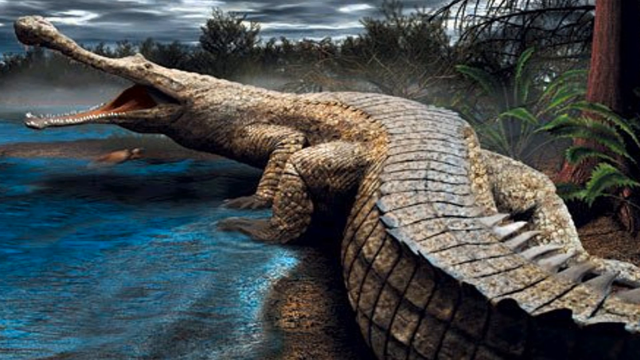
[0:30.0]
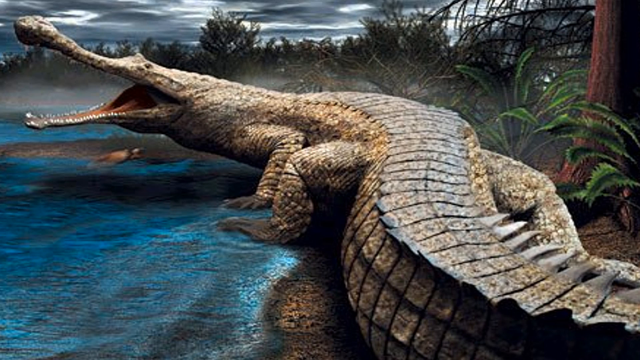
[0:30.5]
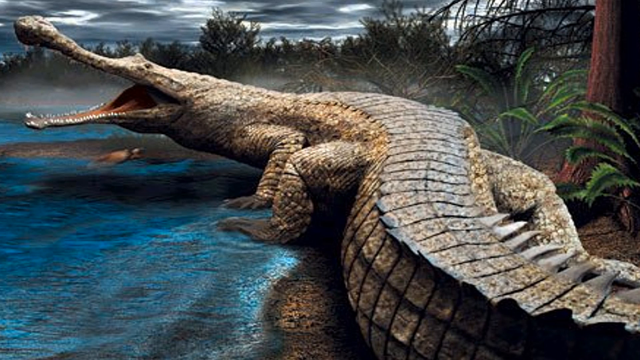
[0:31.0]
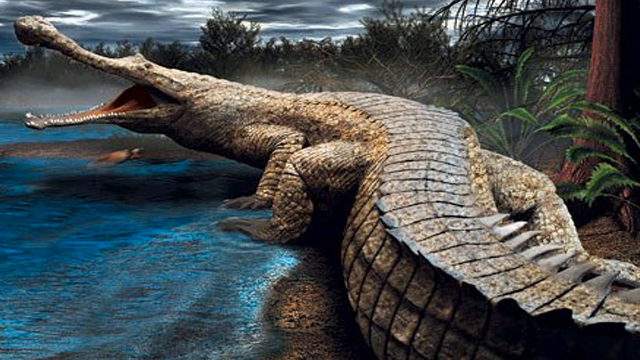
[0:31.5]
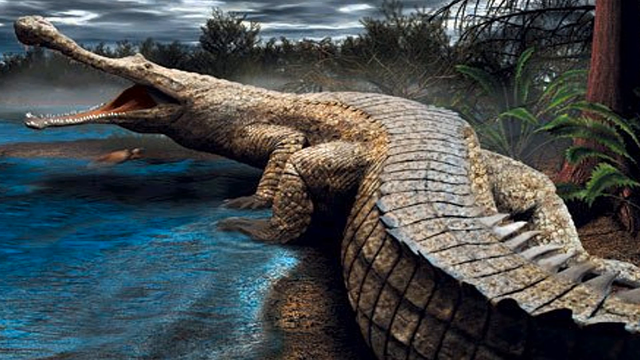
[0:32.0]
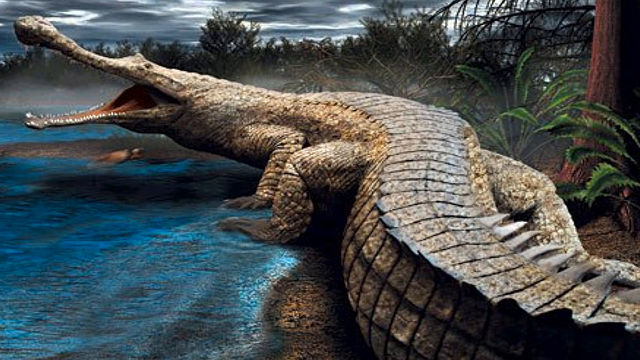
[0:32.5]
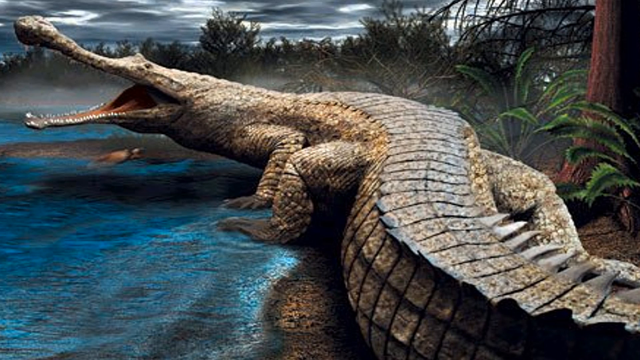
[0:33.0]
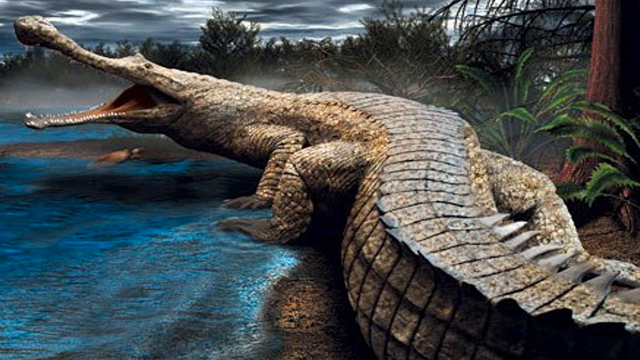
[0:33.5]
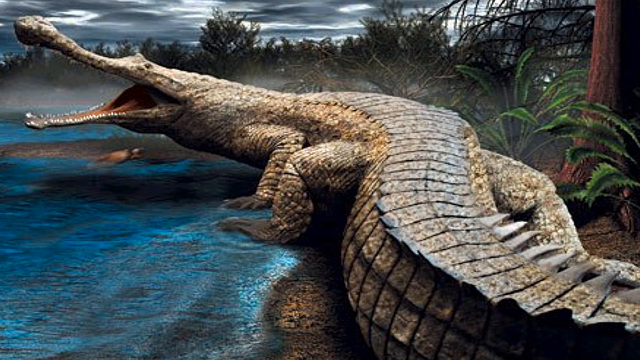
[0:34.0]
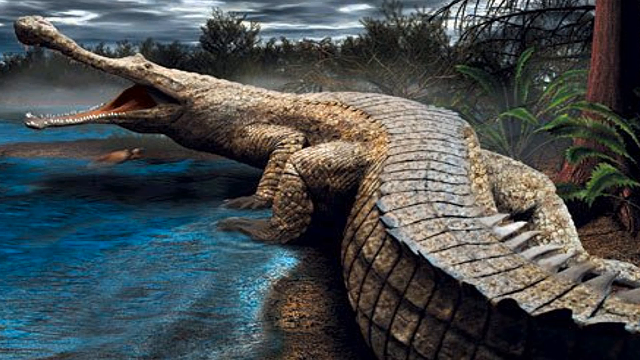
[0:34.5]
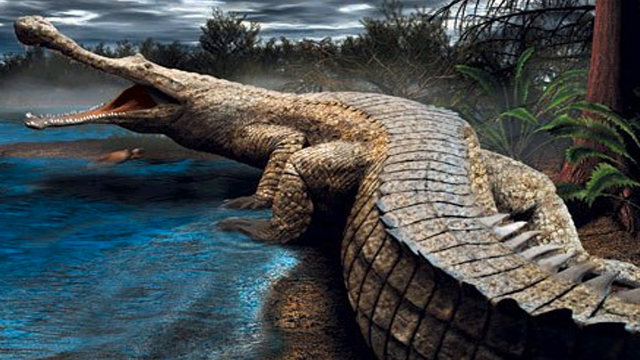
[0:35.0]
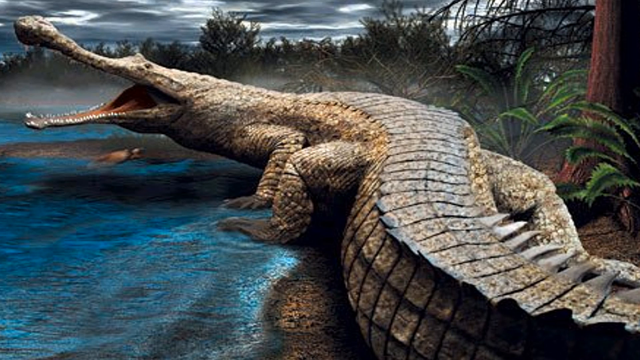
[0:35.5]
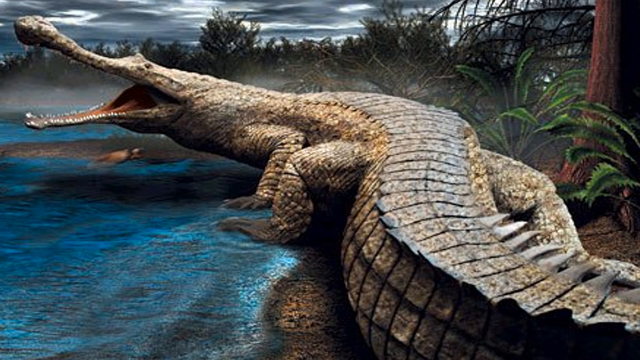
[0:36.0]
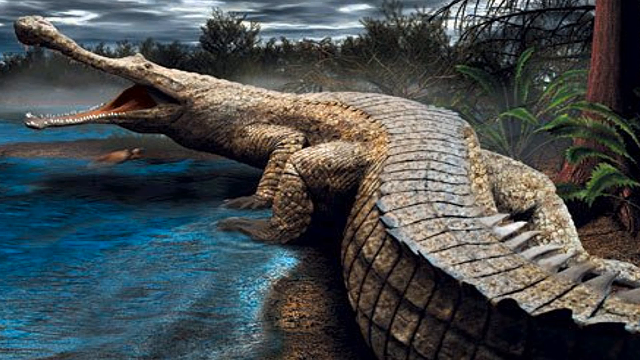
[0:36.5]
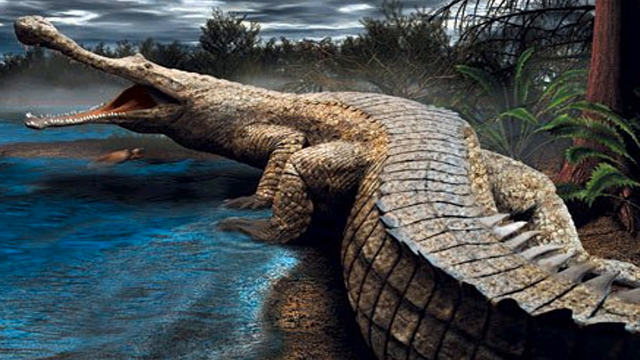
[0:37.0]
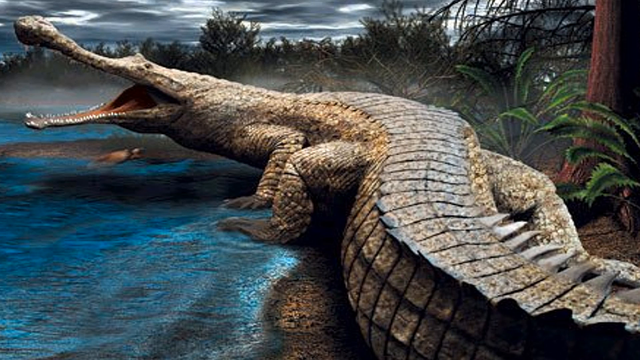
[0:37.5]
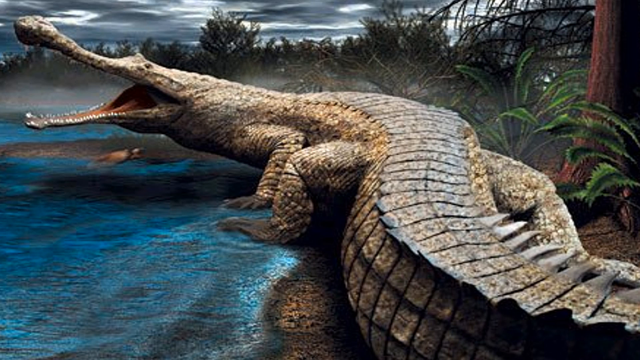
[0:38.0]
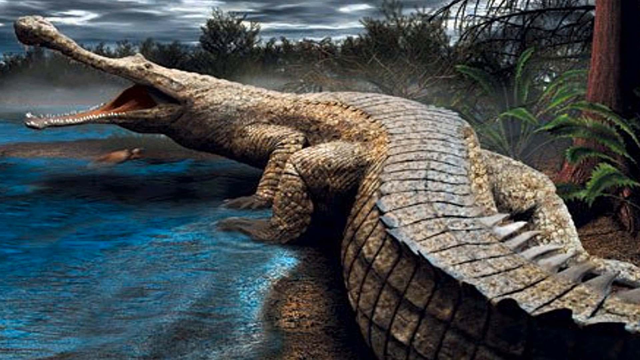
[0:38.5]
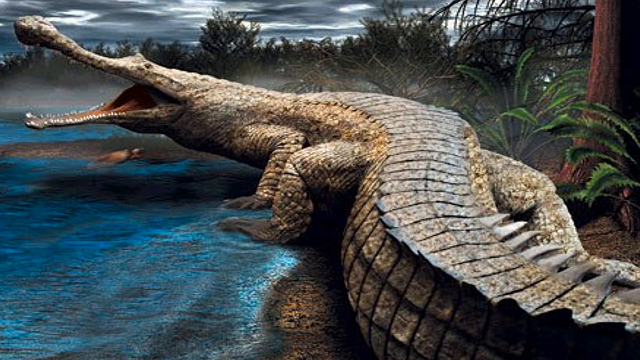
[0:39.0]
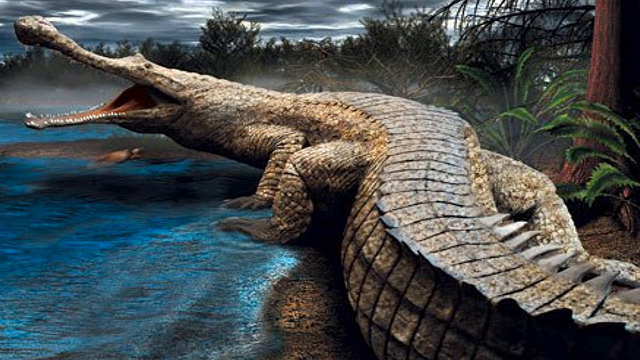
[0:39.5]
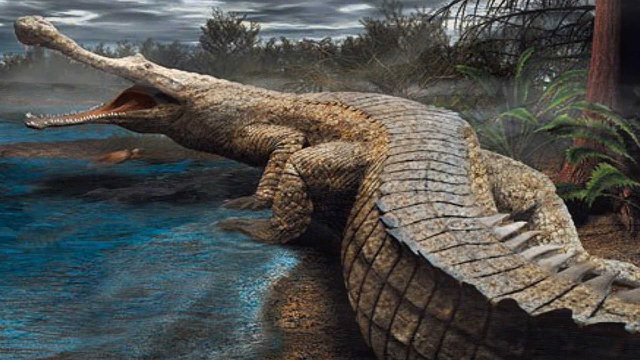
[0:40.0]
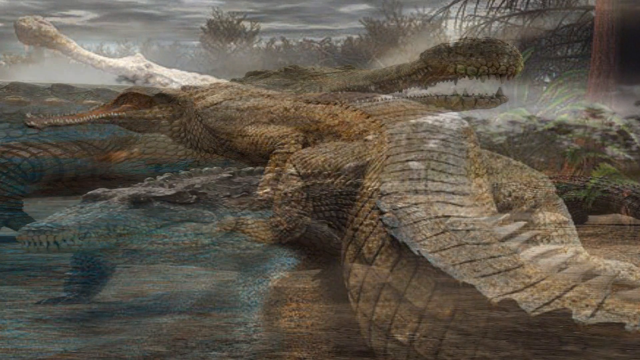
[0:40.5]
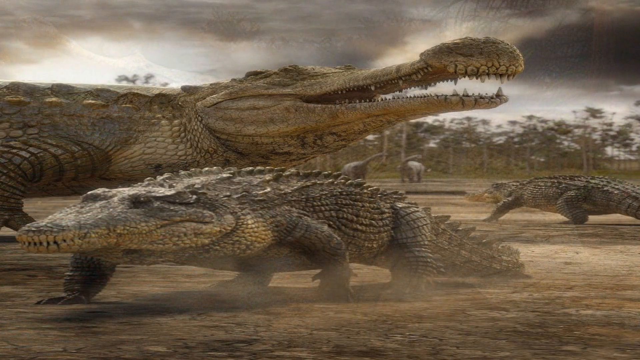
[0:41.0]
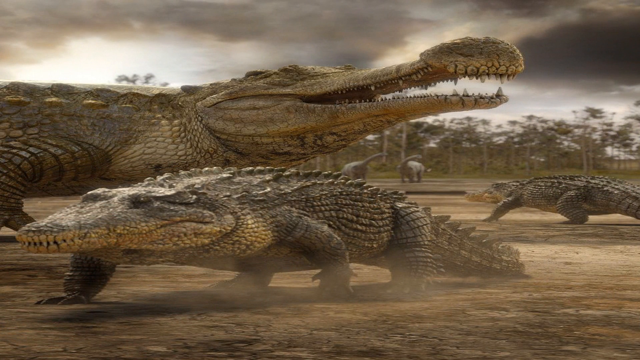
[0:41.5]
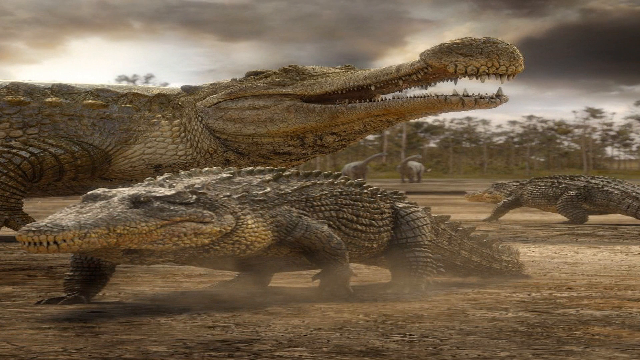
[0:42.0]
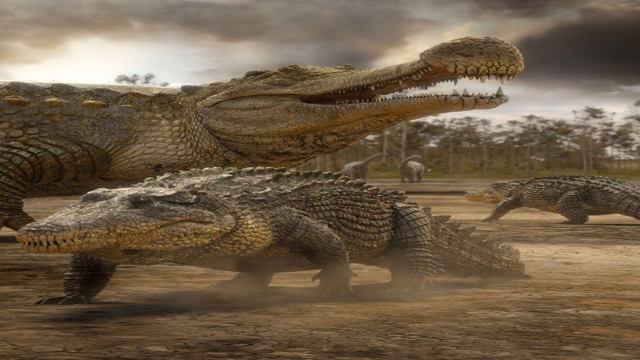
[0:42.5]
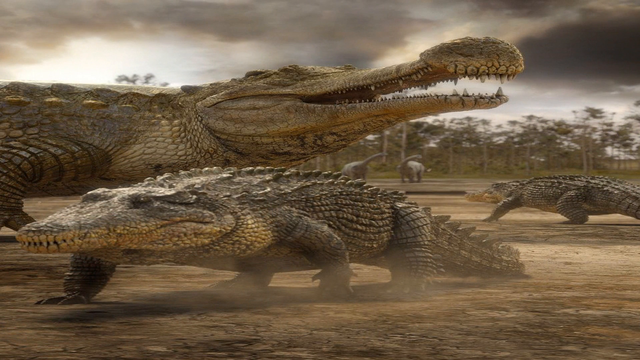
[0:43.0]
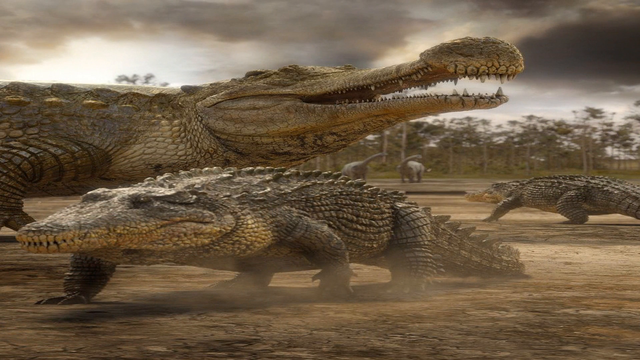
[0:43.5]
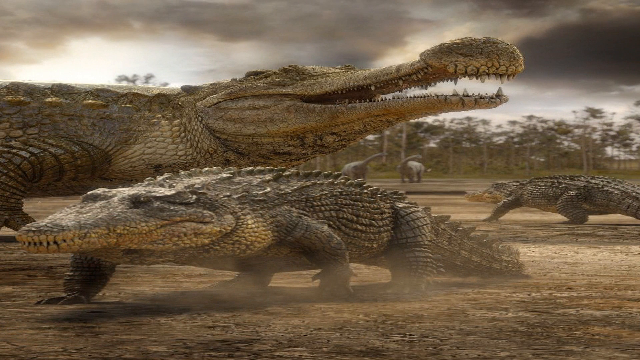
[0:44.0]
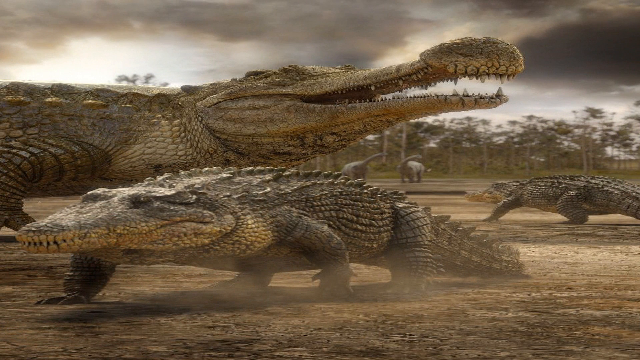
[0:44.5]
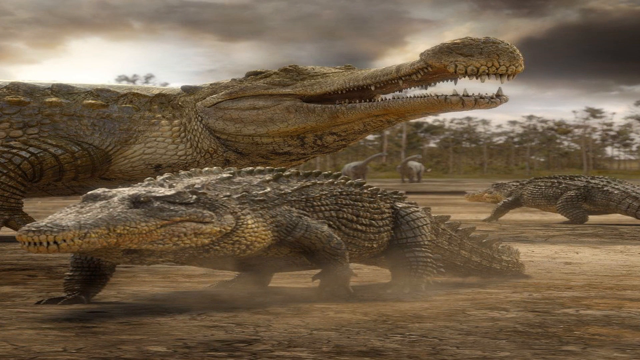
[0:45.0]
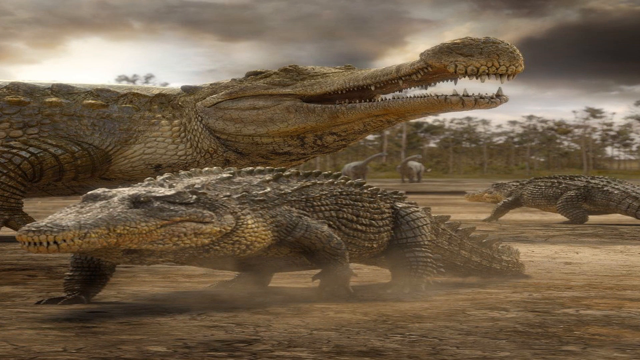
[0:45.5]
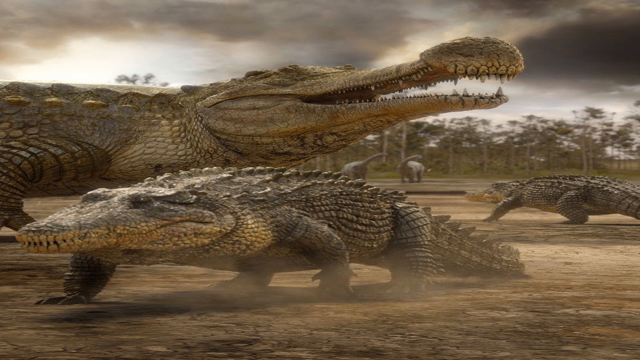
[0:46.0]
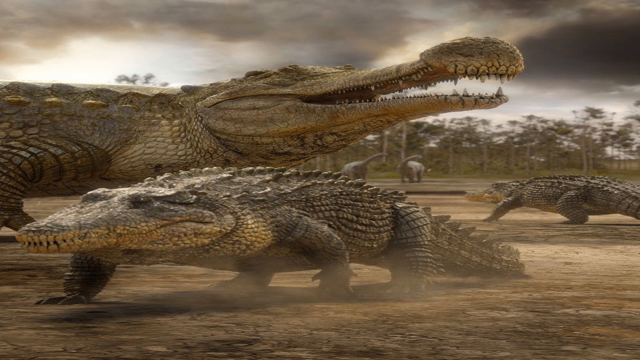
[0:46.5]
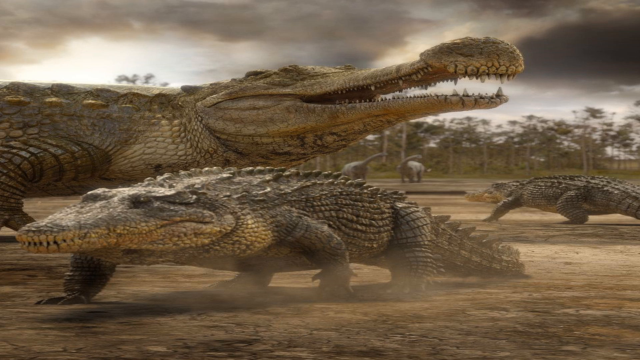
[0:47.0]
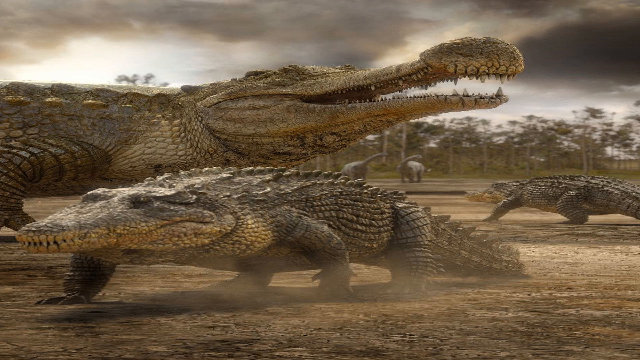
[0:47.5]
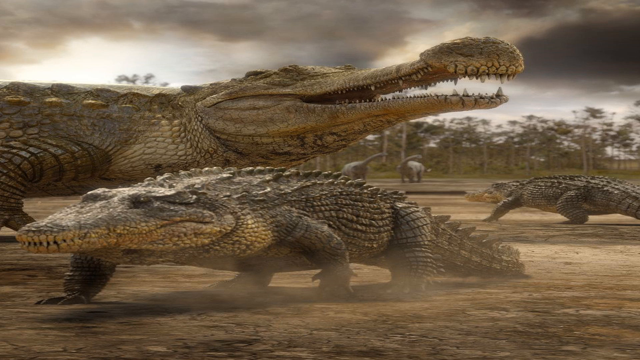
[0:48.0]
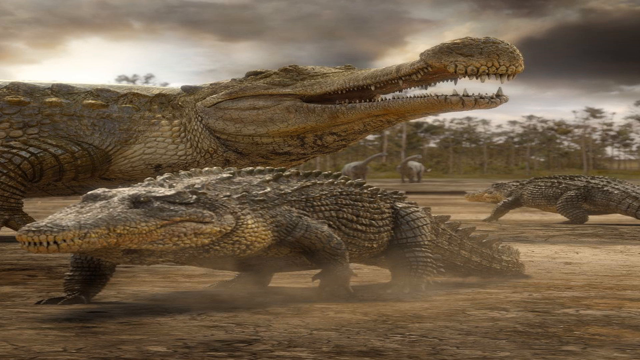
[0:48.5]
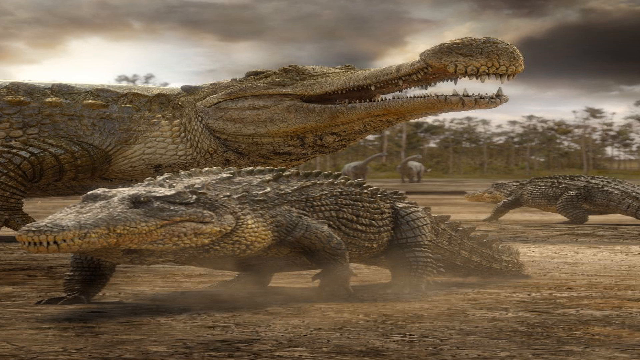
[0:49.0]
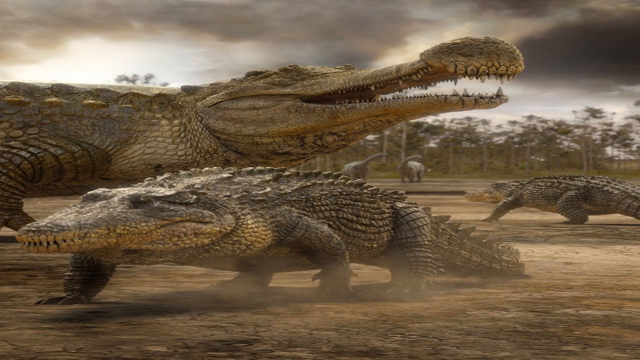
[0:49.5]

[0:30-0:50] The brightly colored still image of the crocodile continues, with the crocodile turned to its left and the view looking up its tail. The image then changes to what is presumably an AI image: a huge crocodile in the mid-ground and a very small crocodile walking underneath the head of the huge one. The sky is overcast and cloudy, and the landscape looks like Florida territory down toward the Everglades. In the far background are what appear to be dinosaurs with long necks, and in the midground another crocodile heads toward the dinosaurs. Everything is on what appears to be dusty land. The image is cluttered and not very believable; the crocodile in the foreground walking under the huge crocodile's head looks really fake, with a triangular head down to its snout. None of the crocodiles look real, except somewhat the huge crocodile.